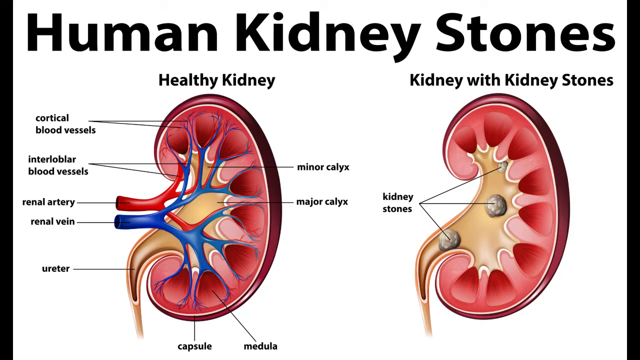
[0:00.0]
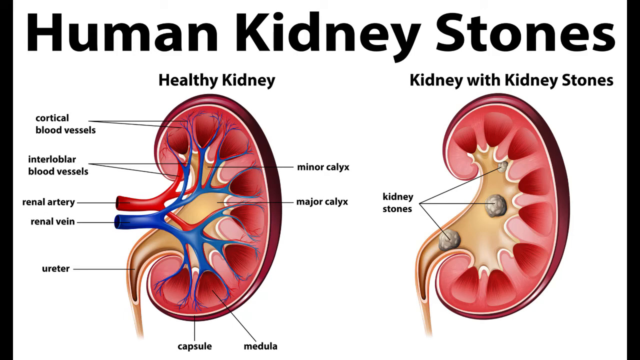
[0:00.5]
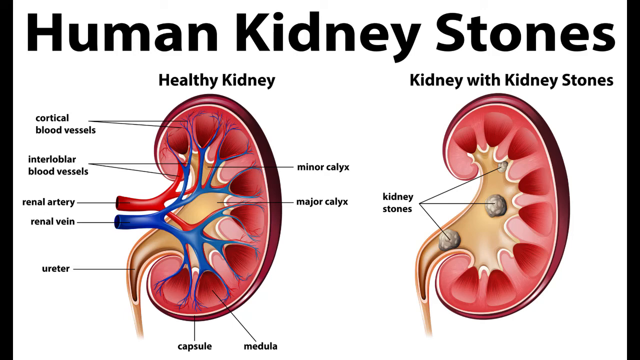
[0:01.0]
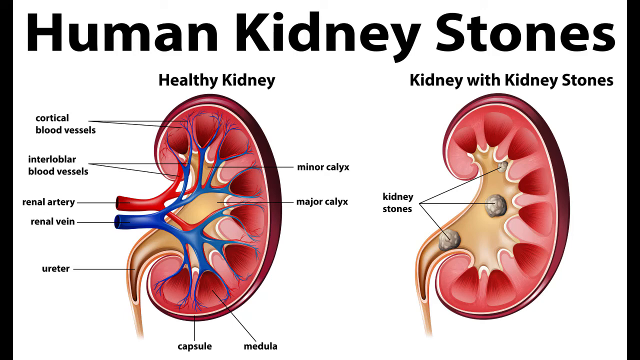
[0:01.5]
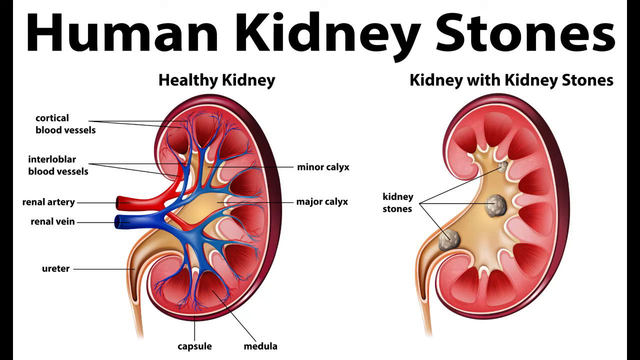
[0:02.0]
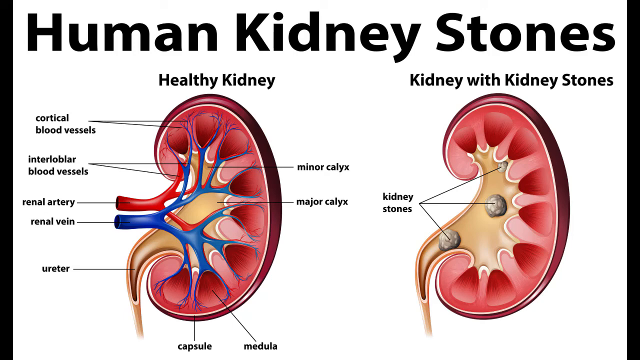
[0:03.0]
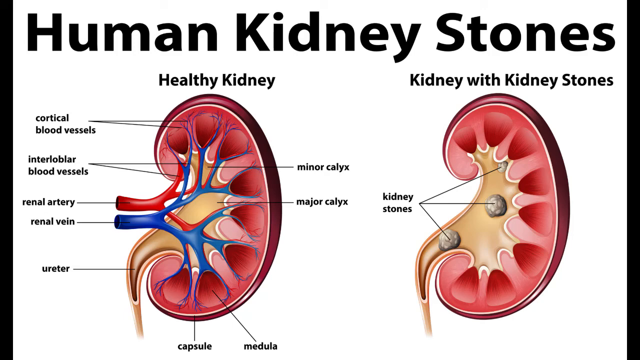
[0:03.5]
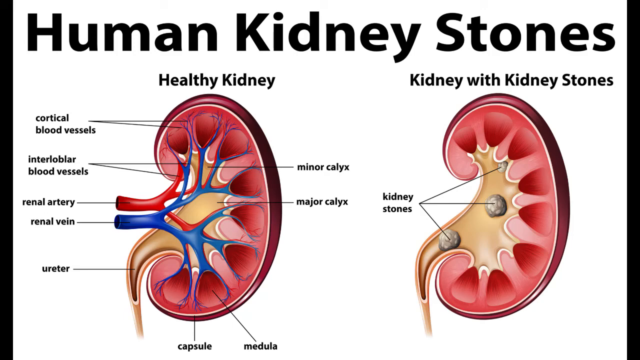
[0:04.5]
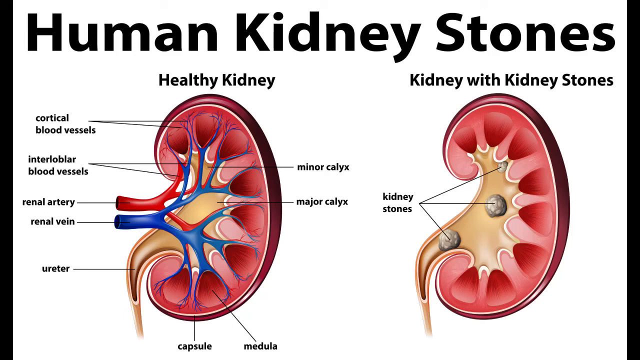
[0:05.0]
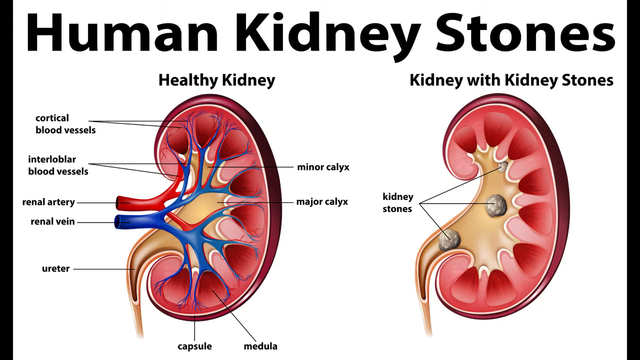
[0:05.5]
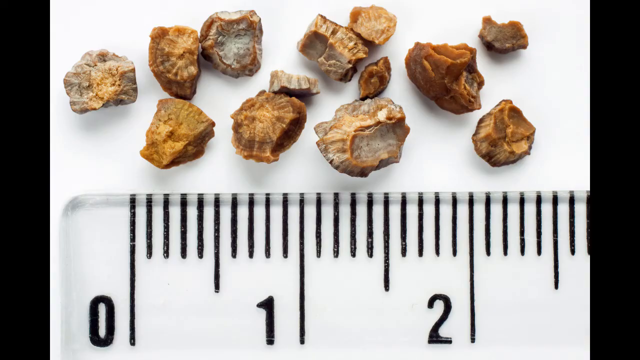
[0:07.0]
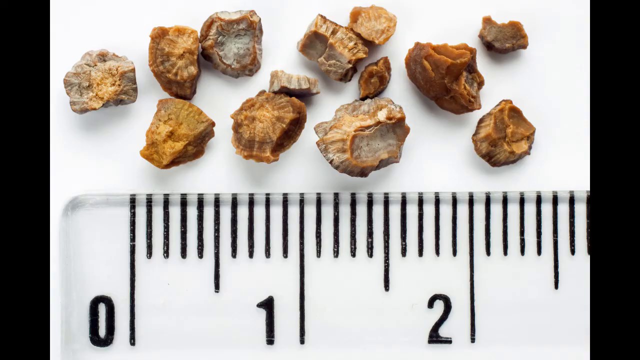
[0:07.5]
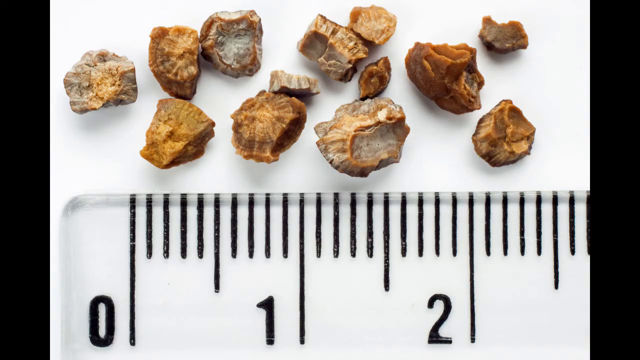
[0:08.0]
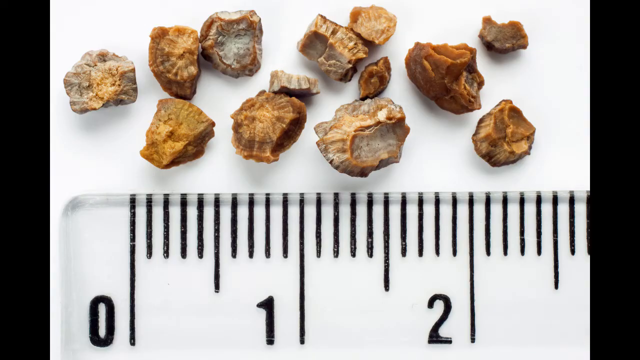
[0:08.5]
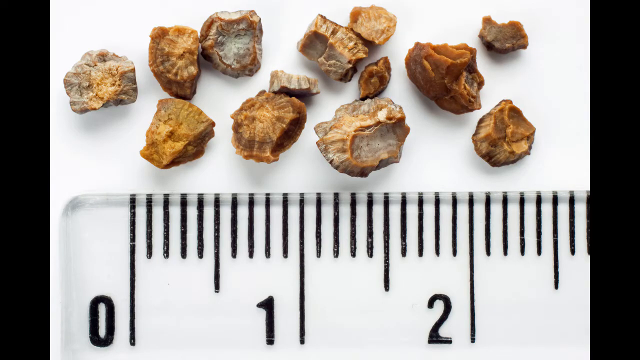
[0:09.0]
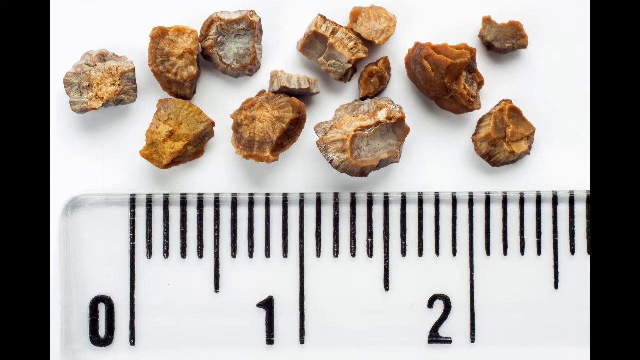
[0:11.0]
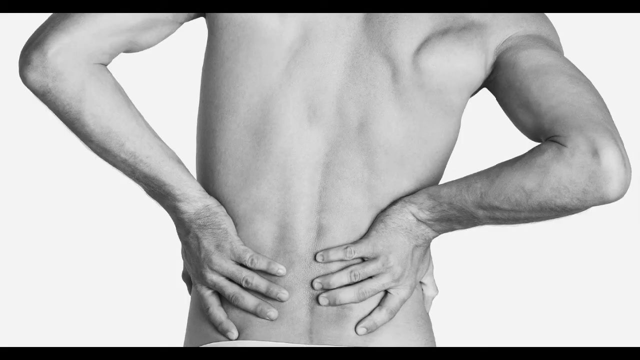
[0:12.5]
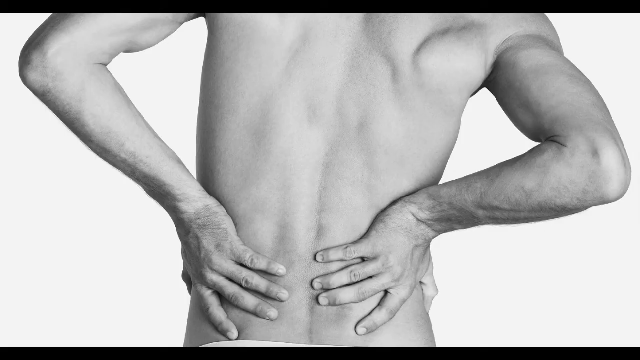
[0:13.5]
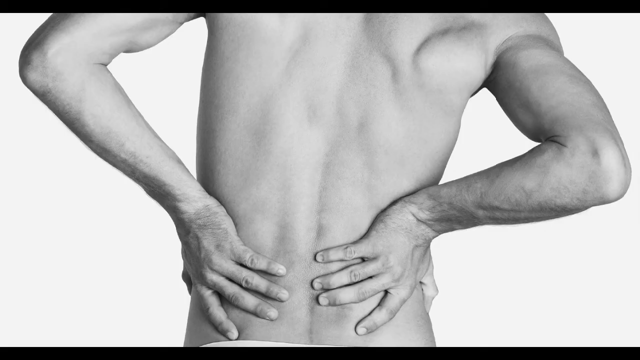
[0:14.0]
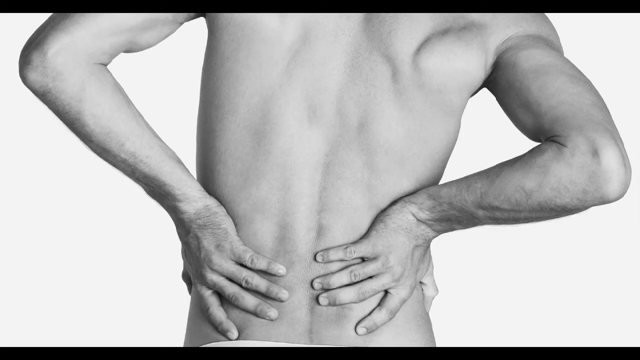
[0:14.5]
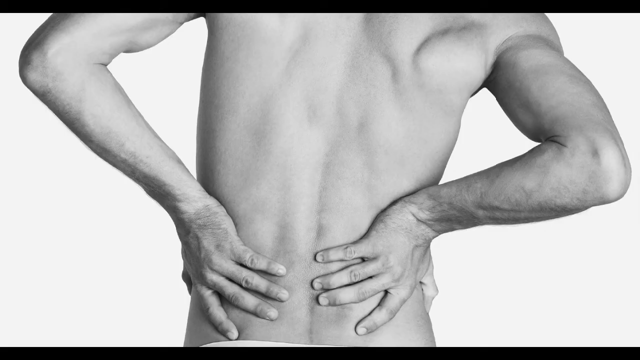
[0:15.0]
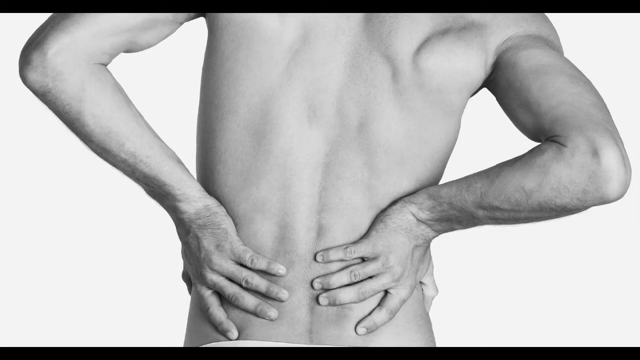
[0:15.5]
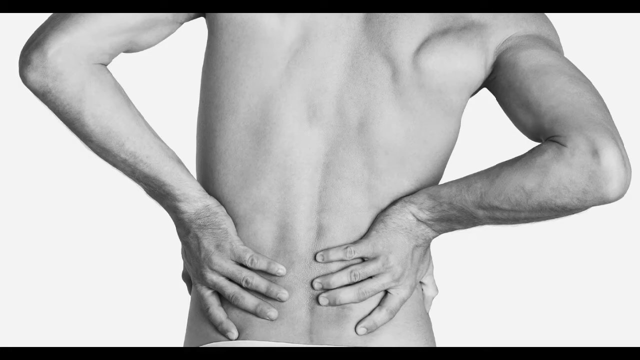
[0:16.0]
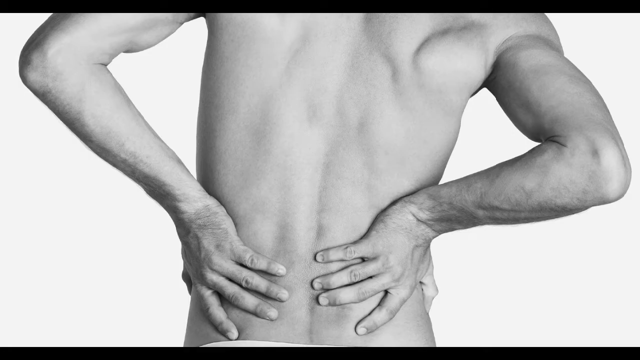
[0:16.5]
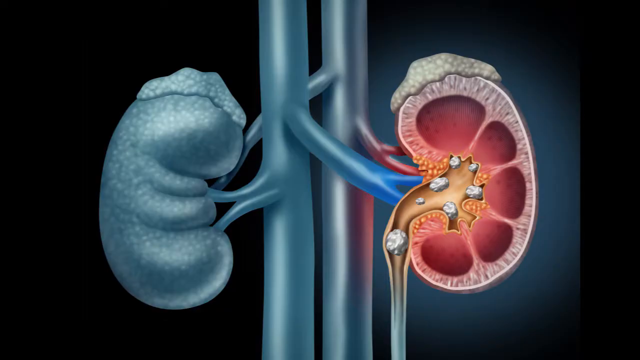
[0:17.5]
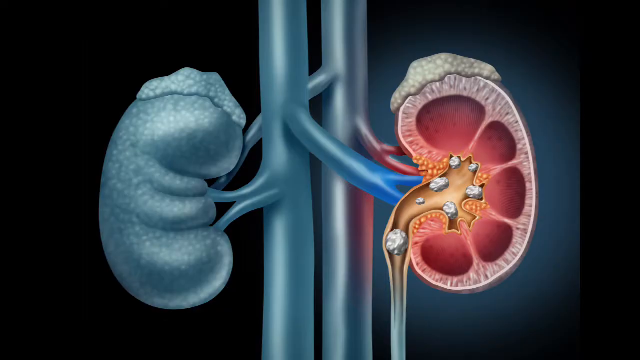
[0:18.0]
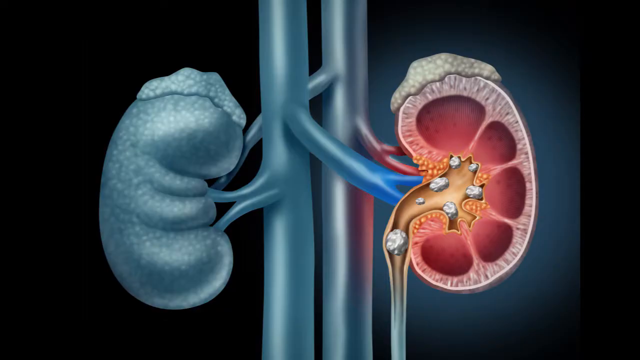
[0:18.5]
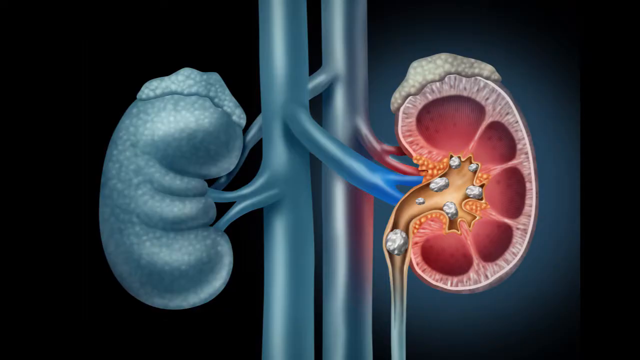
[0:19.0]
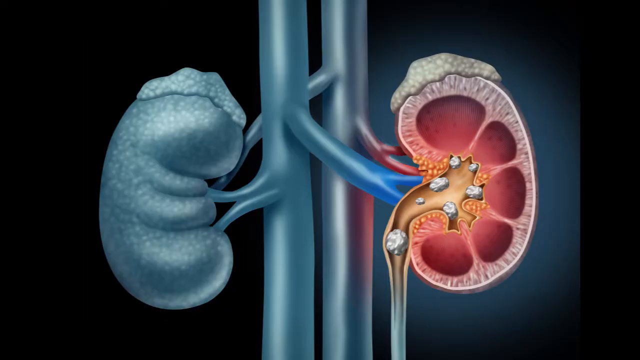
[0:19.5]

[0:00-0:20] A diagram shows human kidney stones, with a healthy kidney on the left side and a kidney with kidney stones on the right side. The kidney on the right contains three stones, while the left side shows how the healthy kidney functions. Nine different sections are listed, labeling the major parts of the kidney. The scene changes to a ruler along the bottom with a number of different-sized kidney stones on top of it; some of the stones look brown and some look gray. The scene changes again to a close-up black-and-white image of someone placing their hands on their lower back, signaling that they are in pain from kidney stones. Next comes a picture of a colorful kidney with kidney stones on the right side and a gray kidney on the left side. In the colorful kidney on the right, stones are going through the tube in the middle and entering the middle, and stones are around the middle area of the kidney.